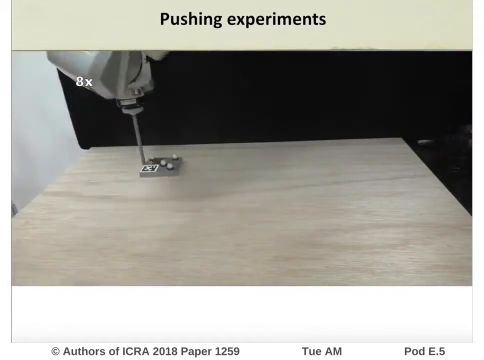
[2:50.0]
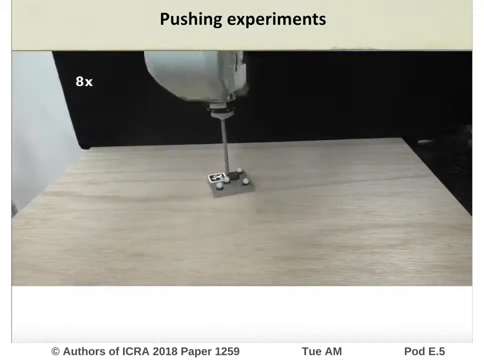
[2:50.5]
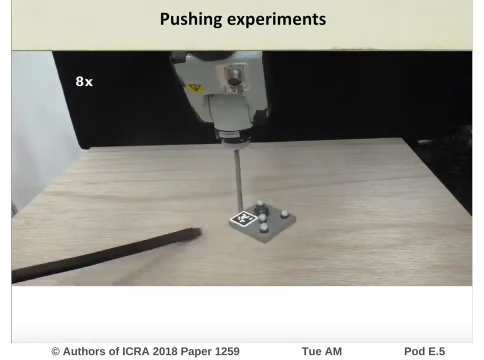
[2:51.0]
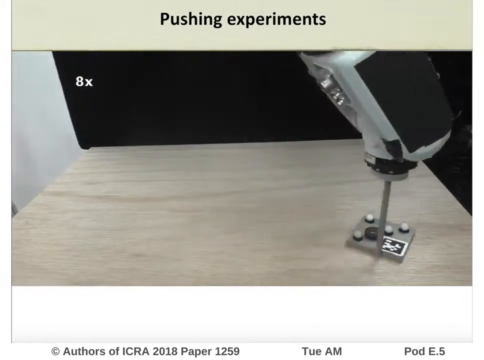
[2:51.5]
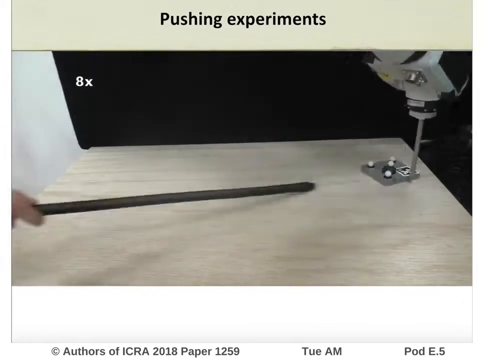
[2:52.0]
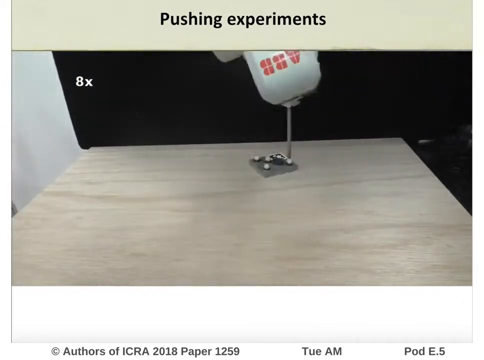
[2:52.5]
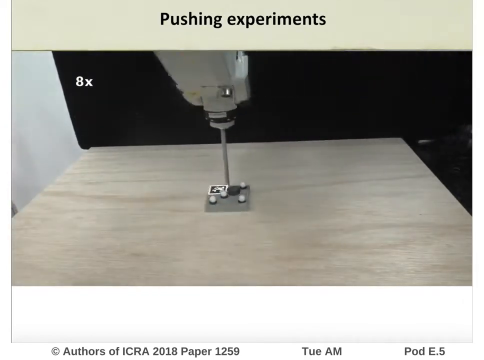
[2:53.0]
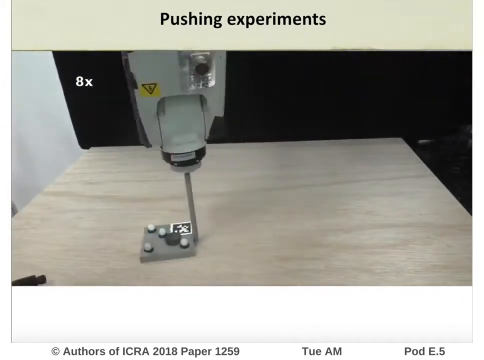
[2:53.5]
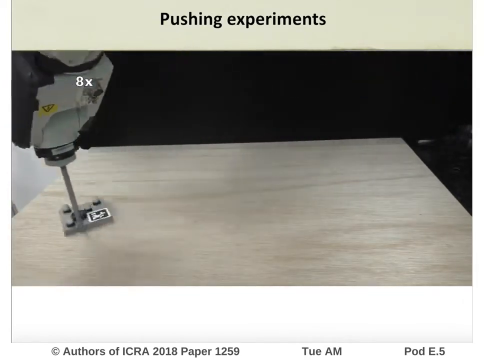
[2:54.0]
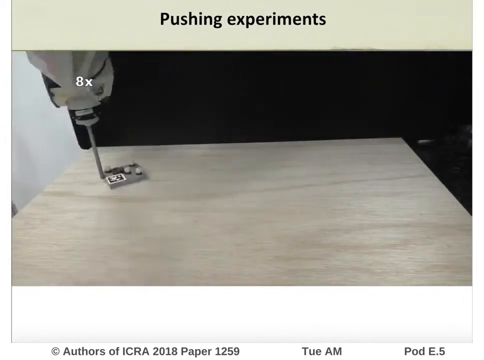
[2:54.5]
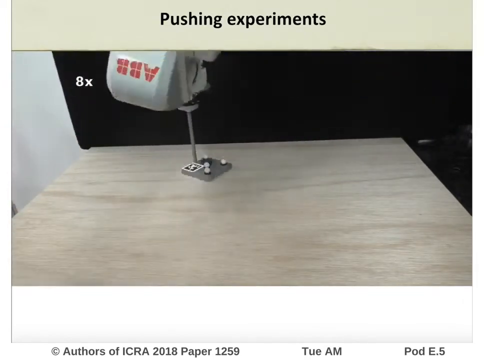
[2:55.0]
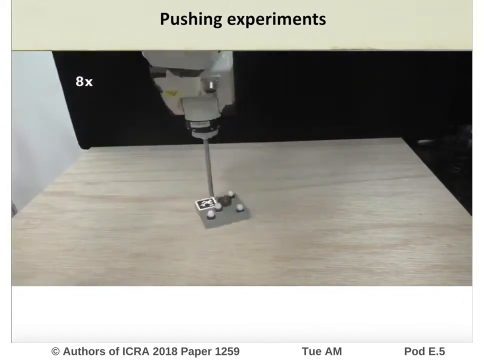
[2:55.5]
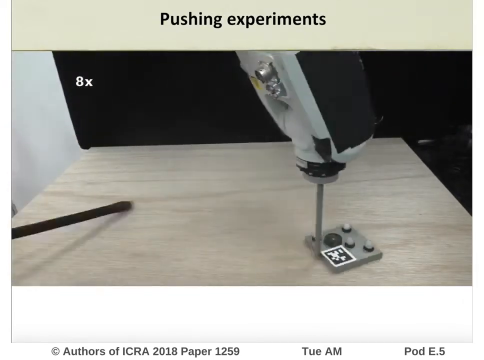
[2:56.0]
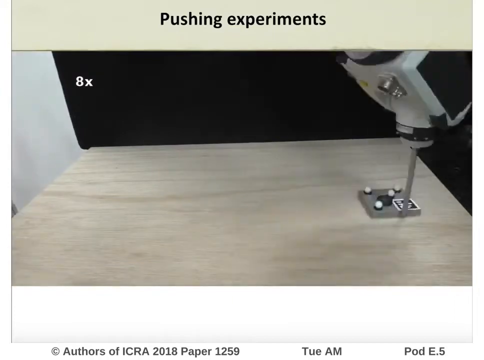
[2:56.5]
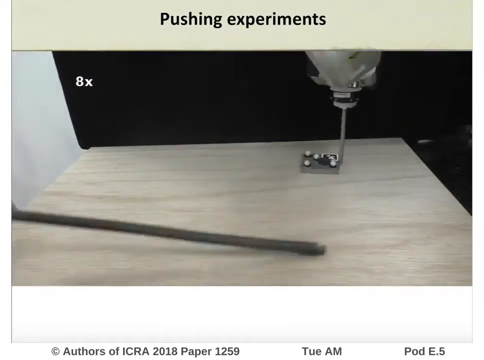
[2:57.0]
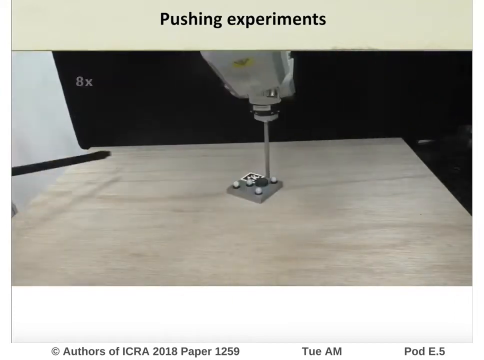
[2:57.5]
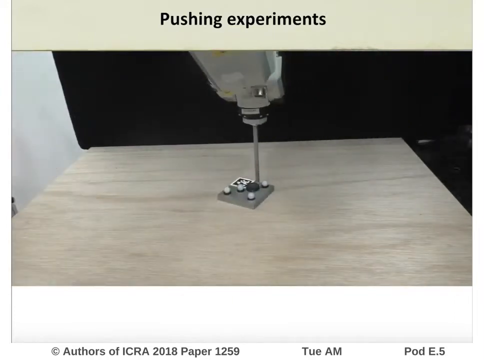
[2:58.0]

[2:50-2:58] The robotic arm has something like a straw, but made of metal, and it pushes a rectangular object, like a piece of metal, with four whitish balls on it: one on each of three corners and another one closer in. There is a black thing that kind of looks like a button, and on one corner is another smaller rectangular thing that is kind of a QR code shape. The footage runs at eight times normal speed. A person pushes a black stick toward the object while the metal arm moves it around, almost like it is trying to keep it away from the person or the stick.